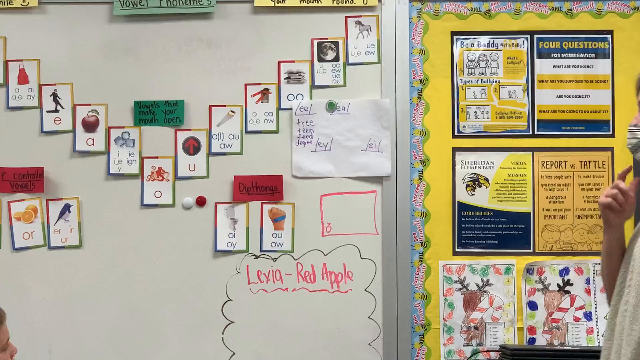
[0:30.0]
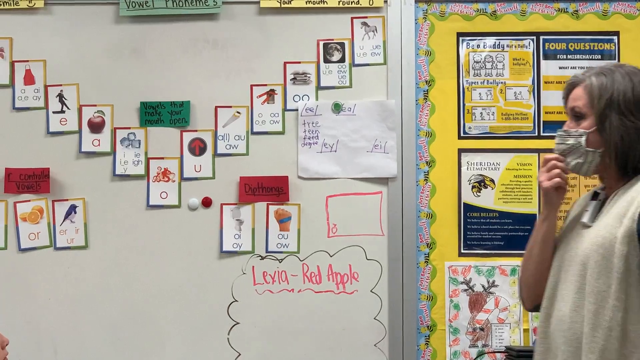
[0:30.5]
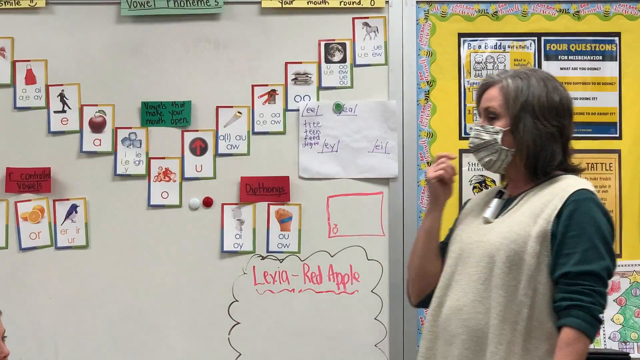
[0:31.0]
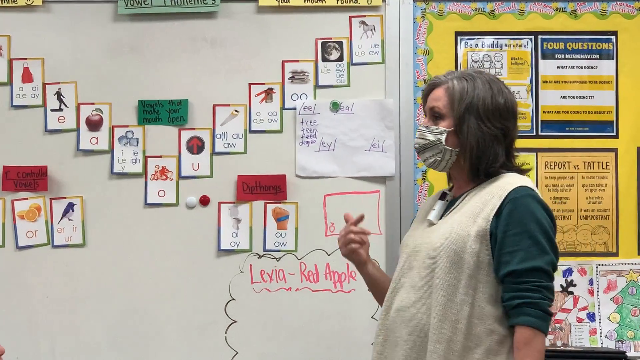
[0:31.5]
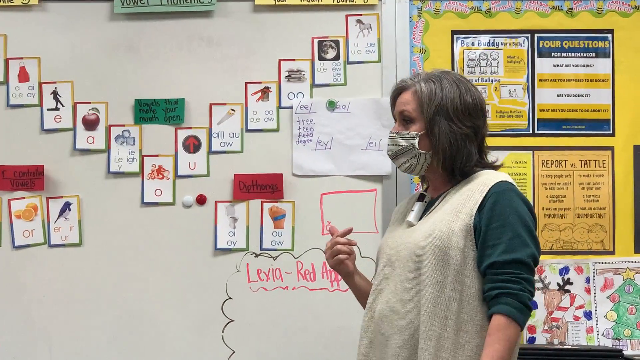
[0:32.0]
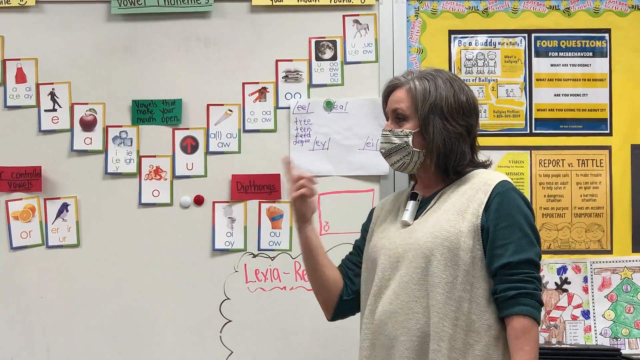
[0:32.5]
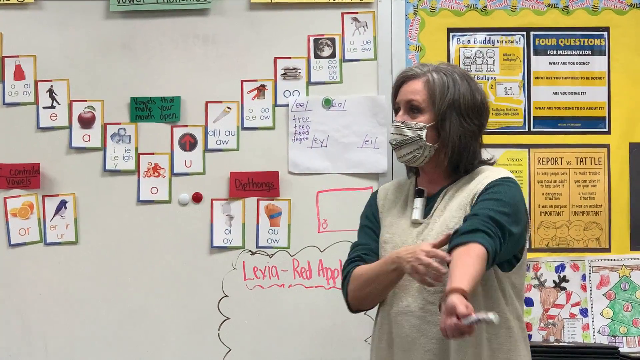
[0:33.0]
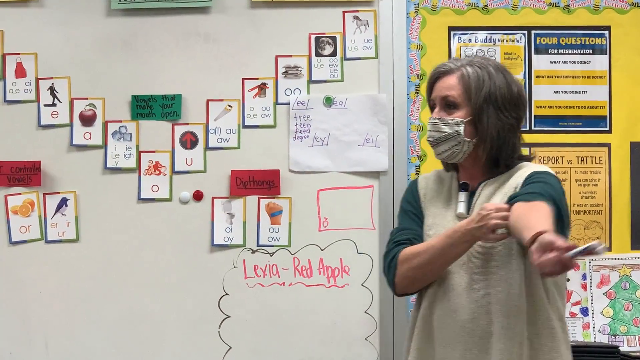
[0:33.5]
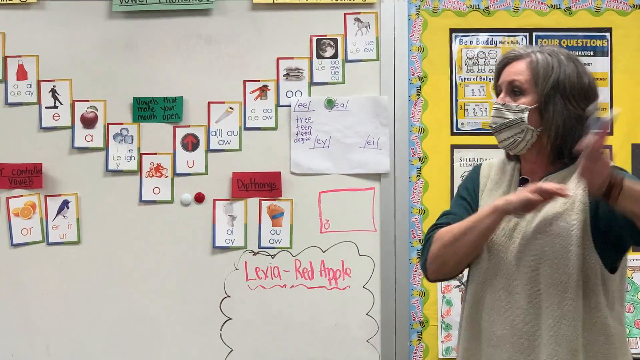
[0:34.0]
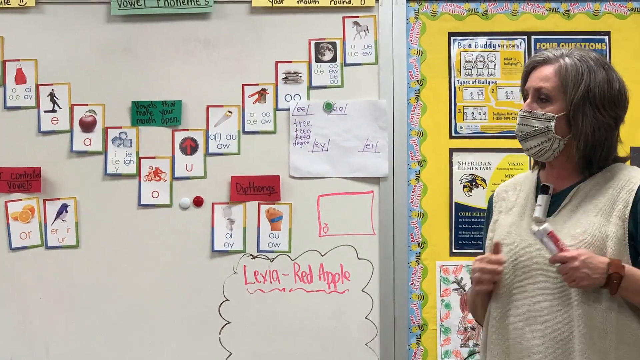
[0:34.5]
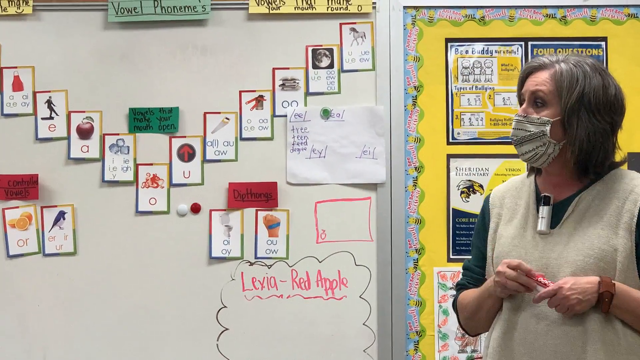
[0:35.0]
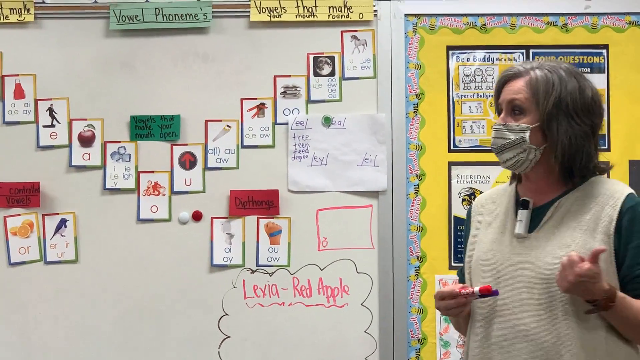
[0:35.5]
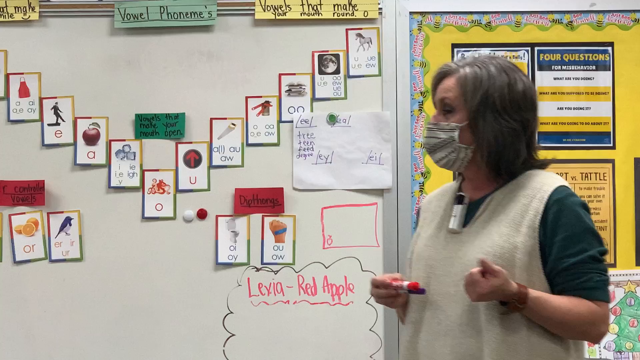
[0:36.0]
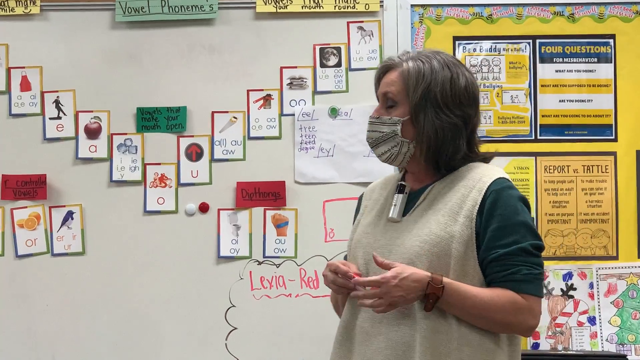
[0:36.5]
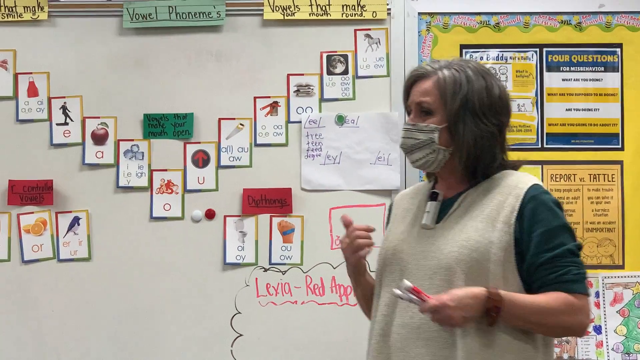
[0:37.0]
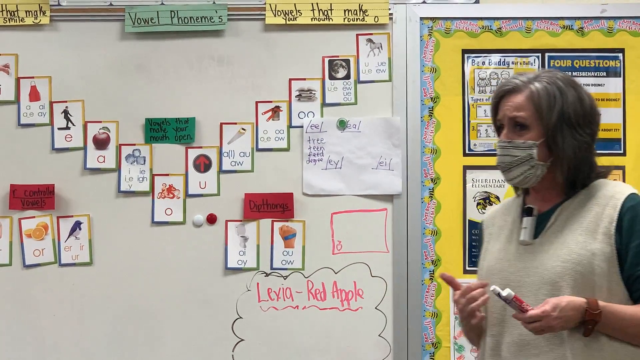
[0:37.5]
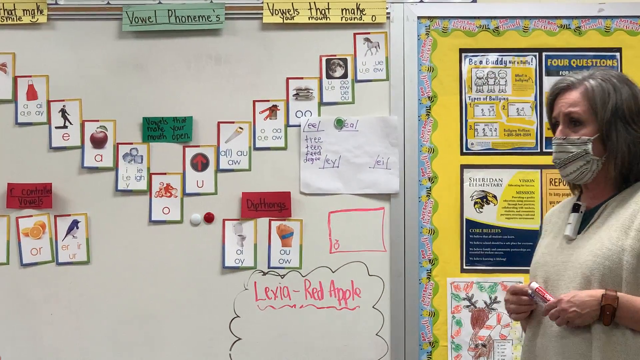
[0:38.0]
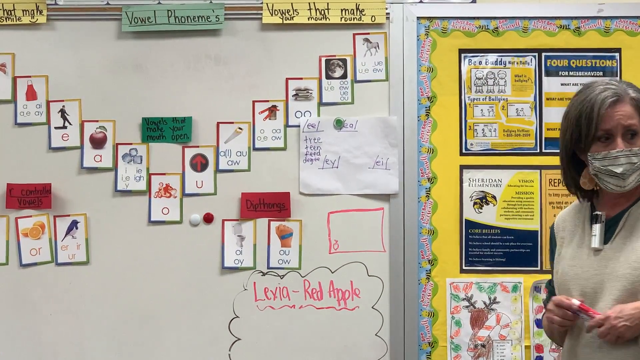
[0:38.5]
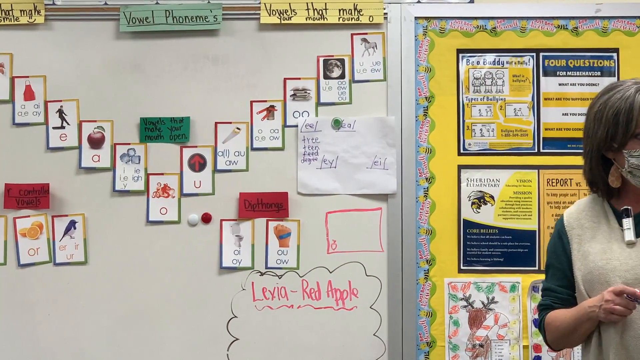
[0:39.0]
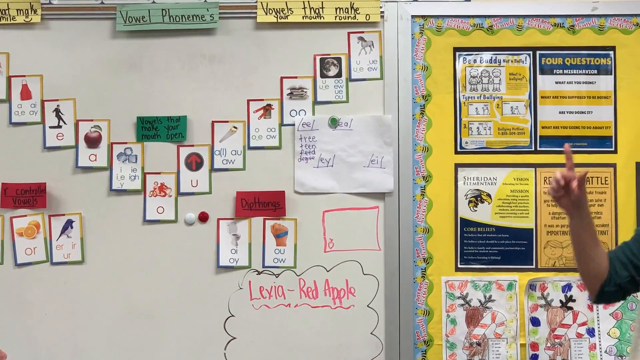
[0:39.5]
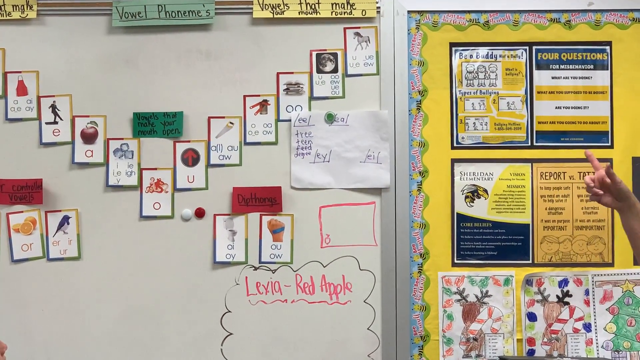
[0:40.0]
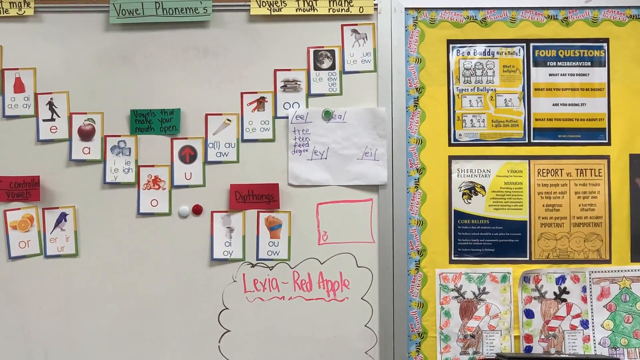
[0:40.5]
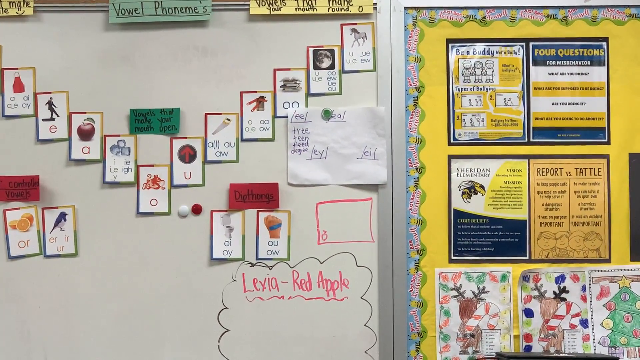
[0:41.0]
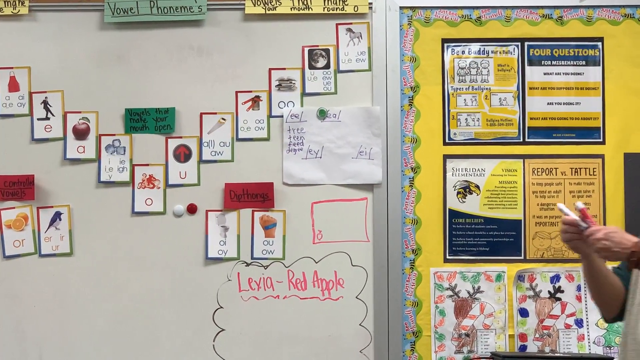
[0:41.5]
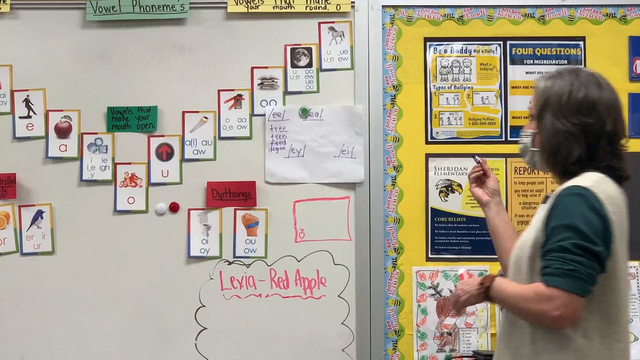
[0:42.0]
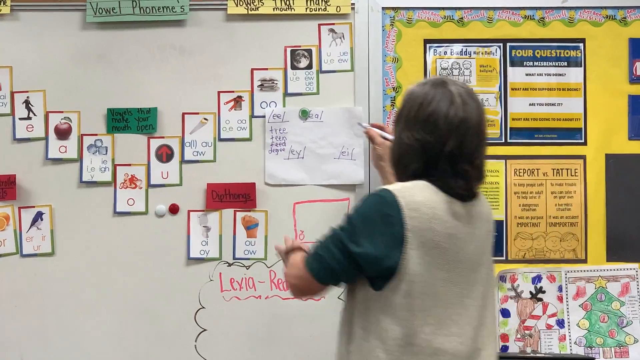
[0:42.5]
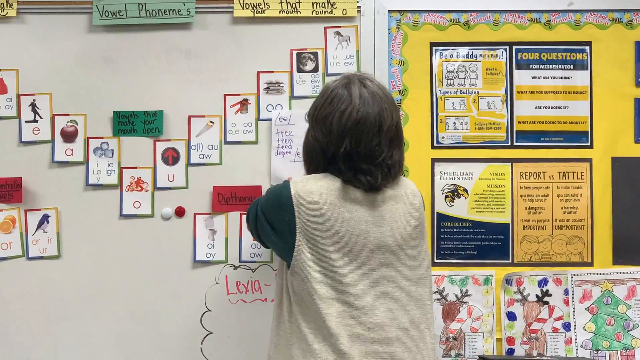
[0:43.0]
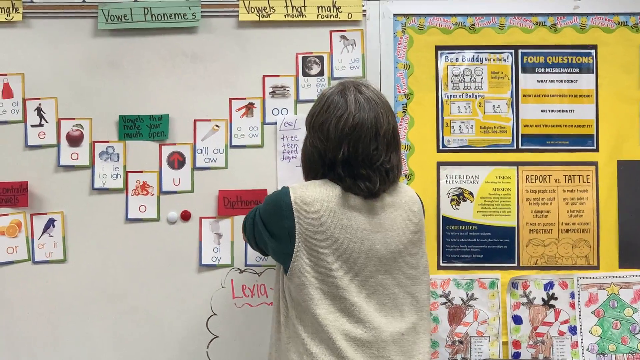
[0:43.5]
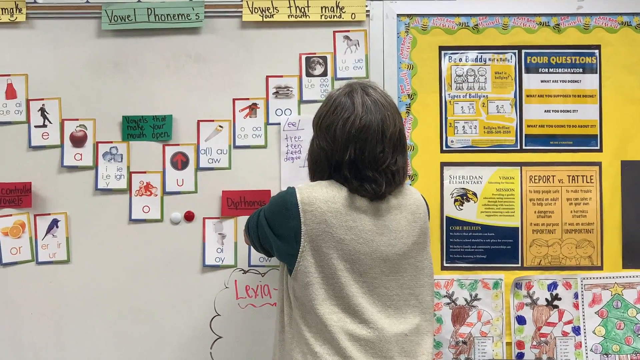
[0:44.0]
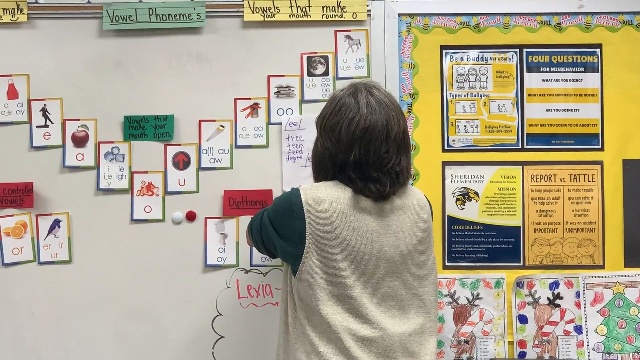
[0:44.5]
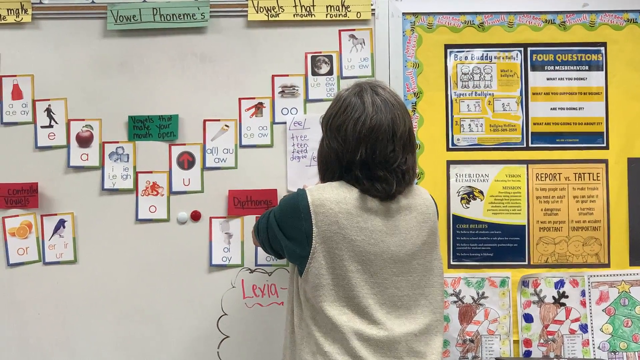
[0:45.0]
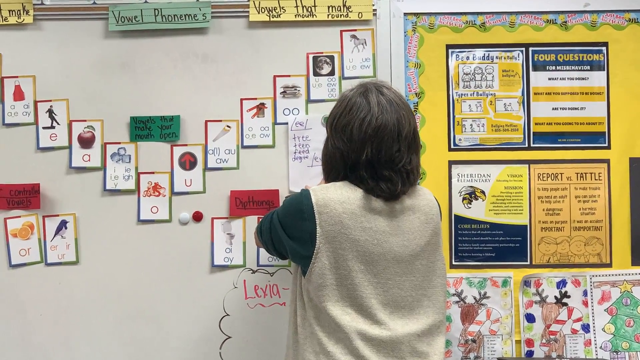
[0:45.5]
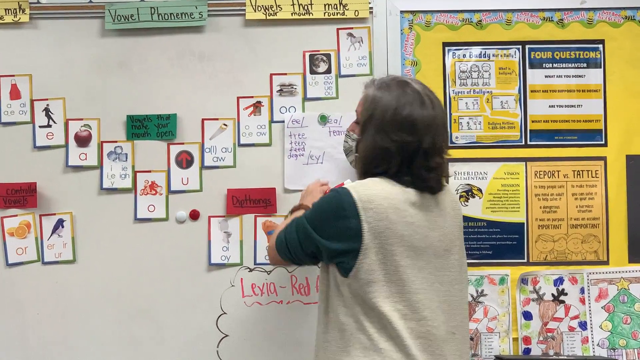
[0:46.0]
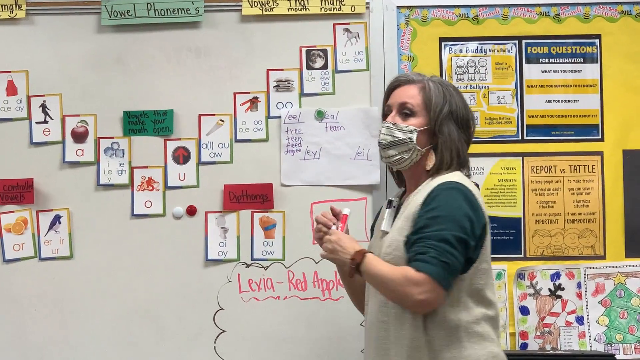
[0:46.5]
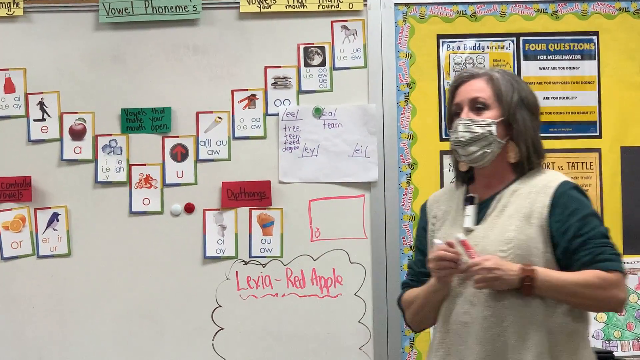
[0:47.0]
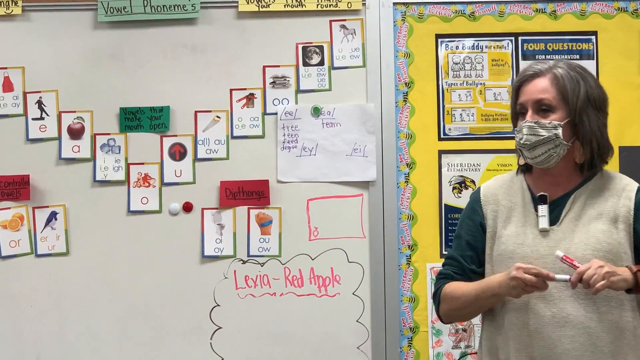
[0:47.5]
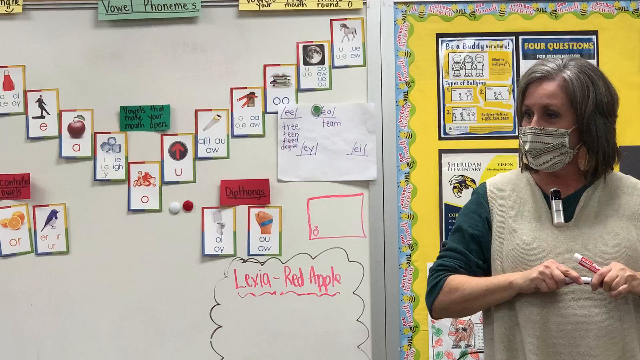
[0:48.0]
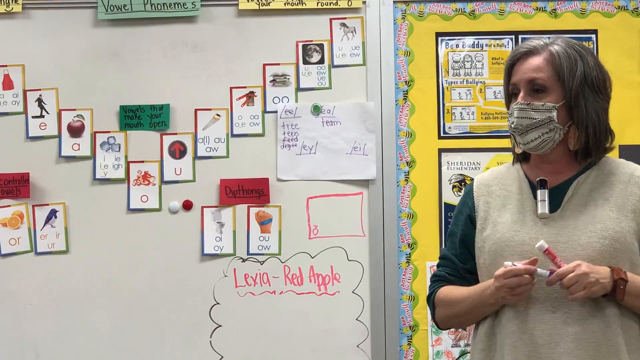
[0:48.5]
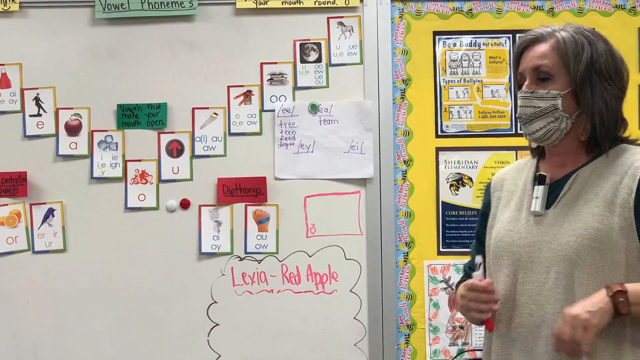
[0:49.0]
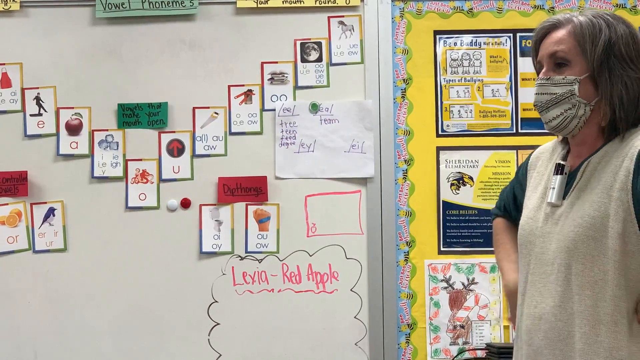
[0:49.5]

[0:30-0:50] The teacher asks questions, explains things and points to the whiteboard. She writes something on a white piece of paper attached to the whiteboard, which also has many different cards with sounds on them and the words "Levia Red Apple" written on it, suggesting this could be a lesson where a foreign language is taught. On the wall is a yellow poster board with other posters and photos. The teacher seems to be explaining to her class what is written on the whiteboard. She wears a face mask, a microphone, an off-white jumper and a green t-shirt, has a brown watch on her wrist, and holds two different coloured pens. At the bottom left, part of a student is visible, seemingly looking directly at the teacher.